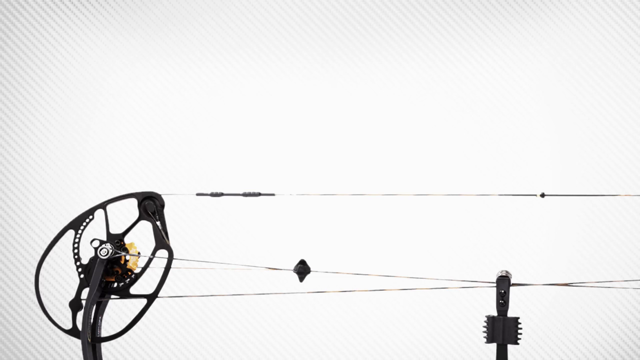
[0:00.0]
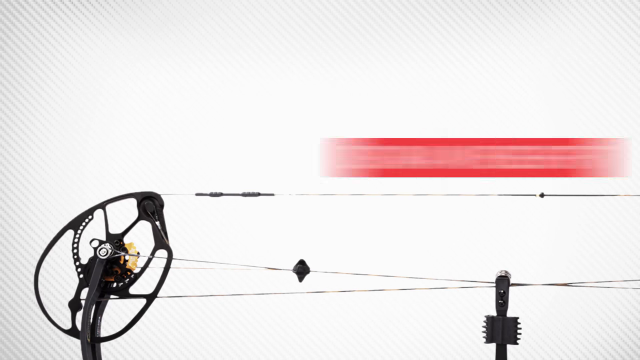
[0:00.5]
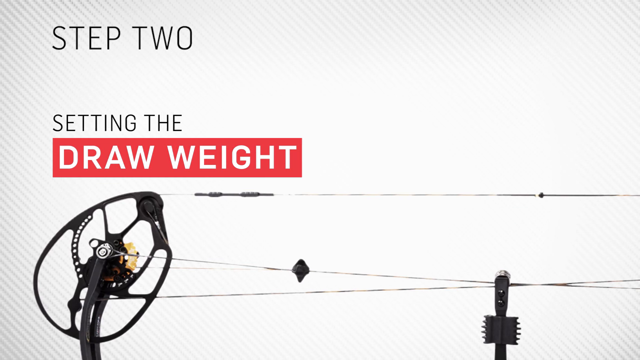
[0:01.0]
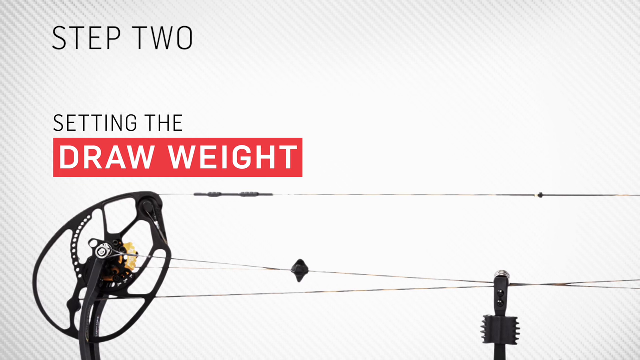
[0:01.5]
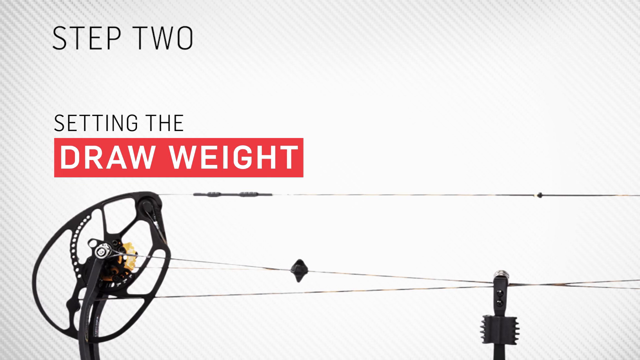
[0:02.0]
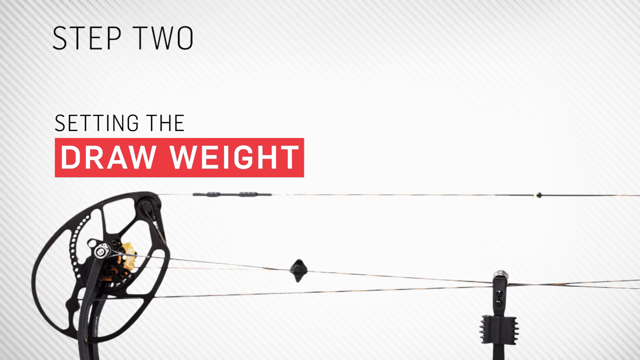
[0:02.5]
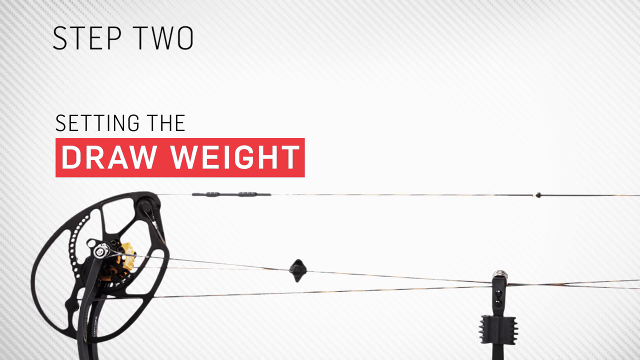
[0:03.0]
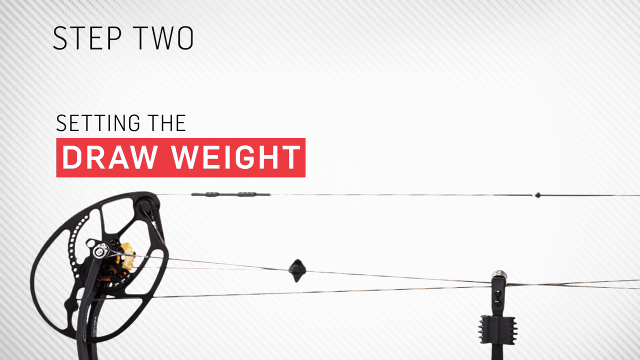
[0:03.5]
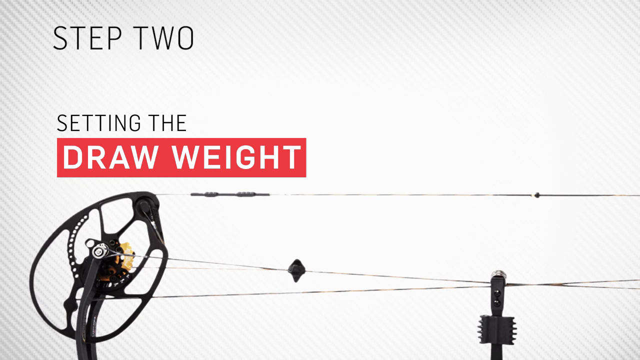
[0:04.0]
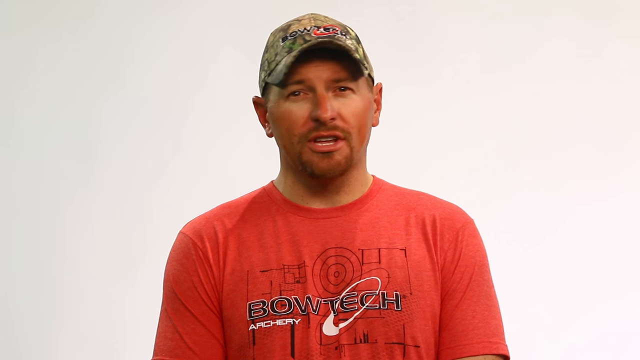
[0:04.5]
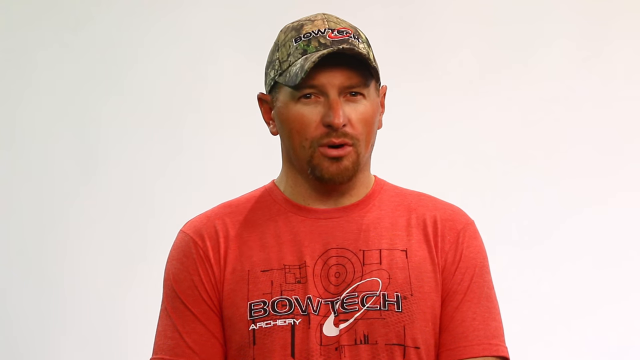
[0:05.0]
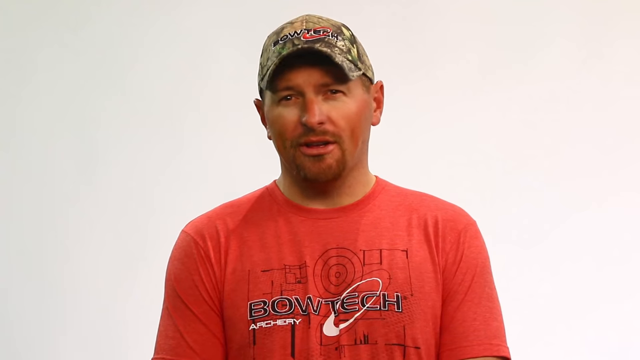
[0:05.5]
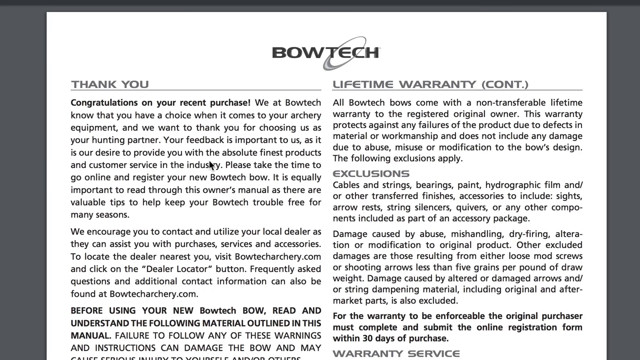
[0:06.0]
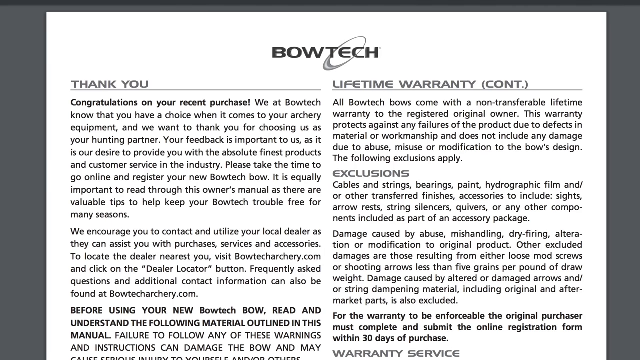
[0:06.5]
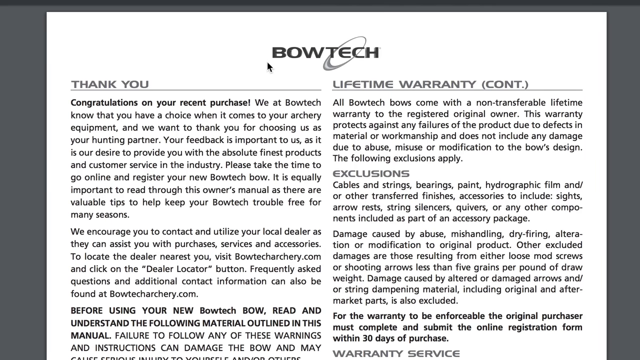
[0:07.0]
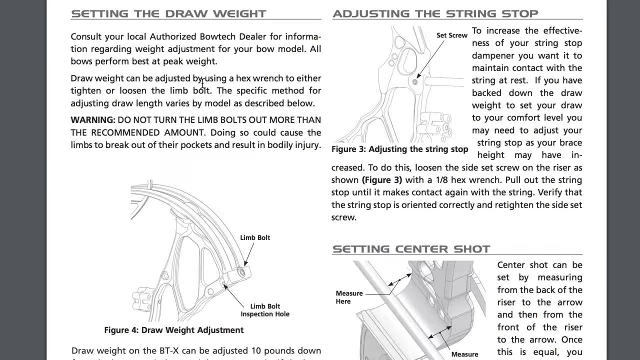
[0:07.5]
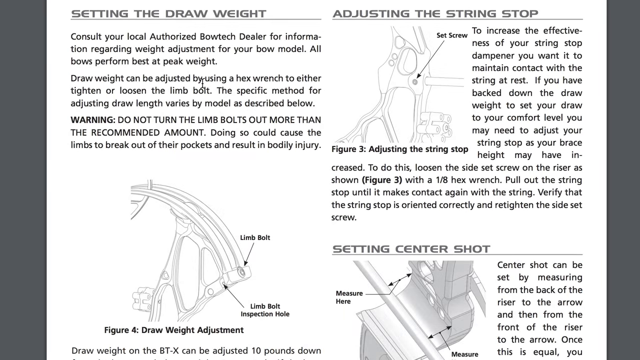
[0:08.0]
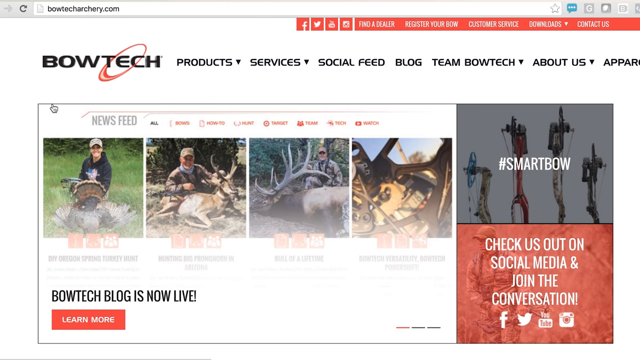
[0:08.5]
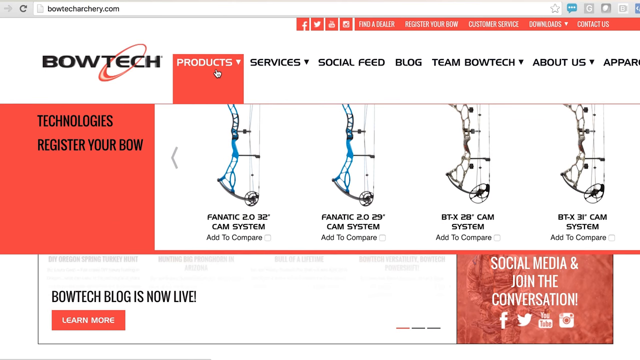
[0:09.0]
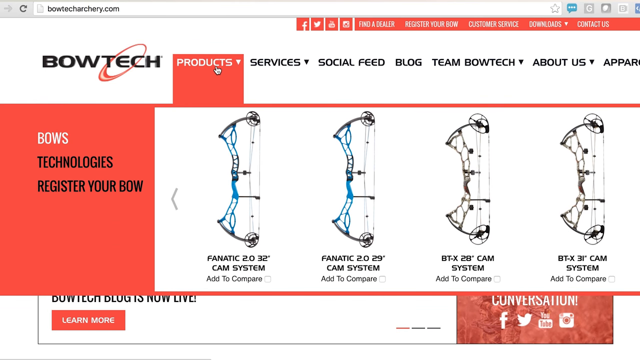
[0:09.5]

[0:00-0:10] The video opens on a white background with what looks like the edge of a bow at the bottom, with the bow's strings visible. Text then slides in from the left and the right: at the top left it reads "Step 2", and in the middle it reads "Setting the draw weight", with "draw weight" in white text over a red rectangle. The video then cuts to what appears to be a Caucasian man looking at the camera and talking against a white background. He wears a red t-shirt with "Bowtech Archery" on the front and a camouflage-colored hat with "Bowtech" on top. He has a little mustache and goatee and looks to be in his 30s or 40s. Next comes what appears to be a PDF document with a white background and a lot of black text, with "Bowtech" at the top and headings including "Lifetime Warranty", "Setting the draw weight", "Adjusting the String Stop" and "Setting Center Shot". The video then shows what looks like an address bar reading "BowtechArchery.com" at the top. A white mouse cursor comes in from the left side and moves to the page headers, which read "Products, Services, Social Feed, Blog, Team Bowtech, About Us". The cursor goes to the products header, which turns red, and a dropdown appears with what looks like four bows.